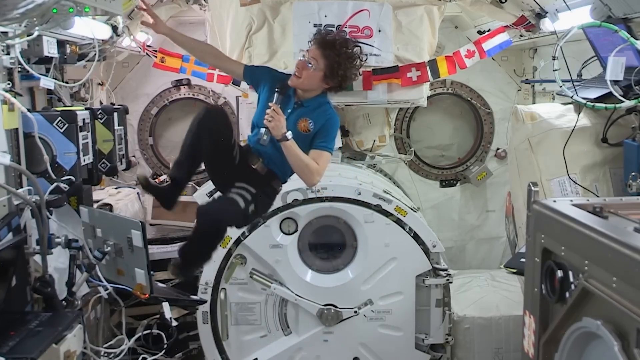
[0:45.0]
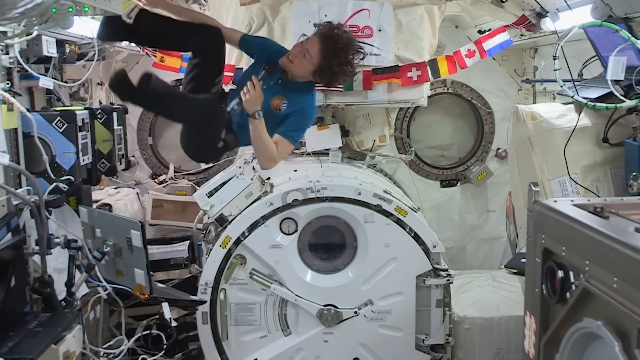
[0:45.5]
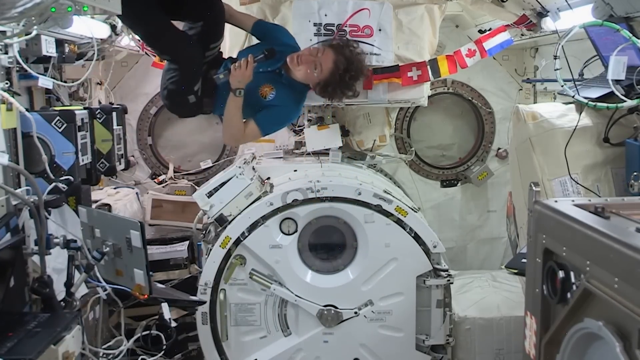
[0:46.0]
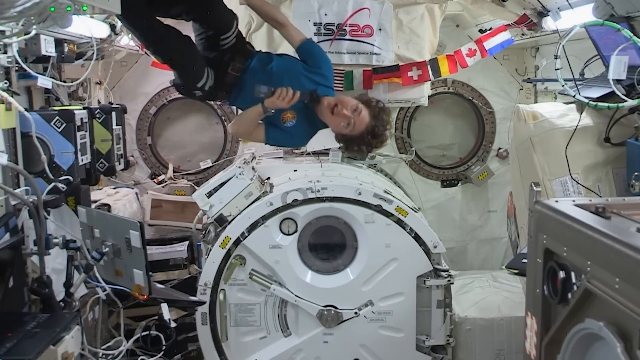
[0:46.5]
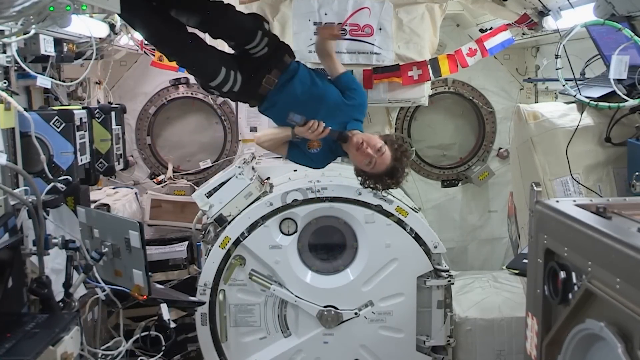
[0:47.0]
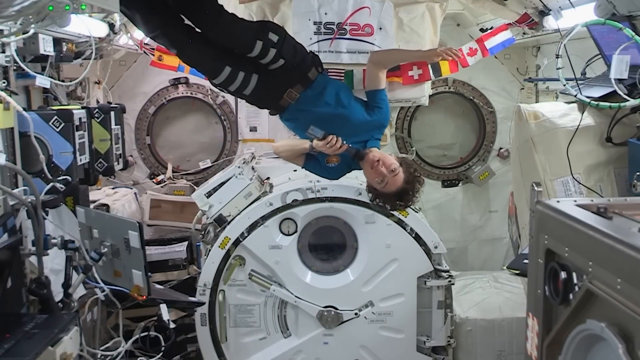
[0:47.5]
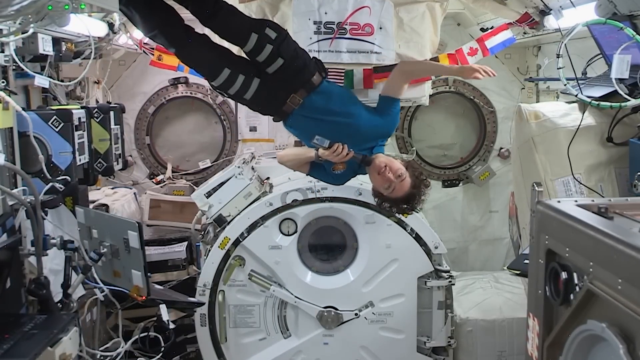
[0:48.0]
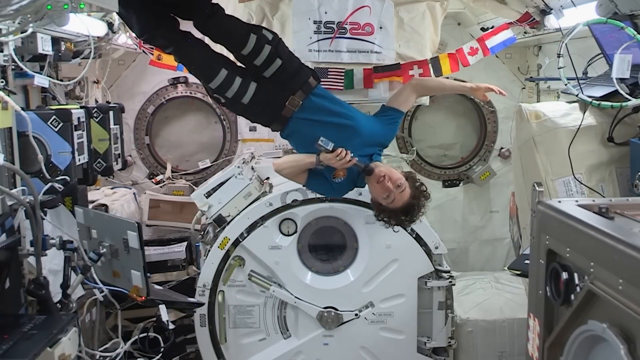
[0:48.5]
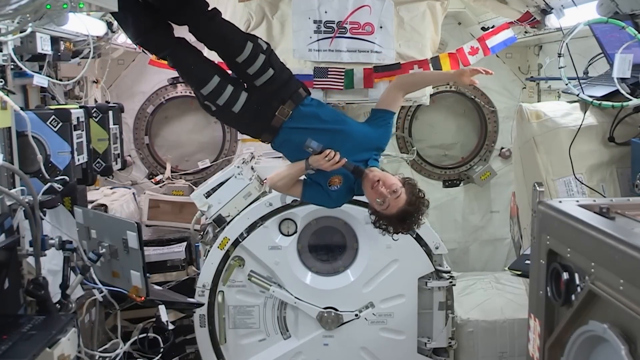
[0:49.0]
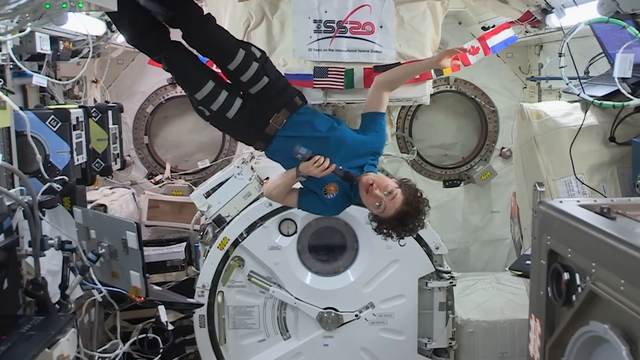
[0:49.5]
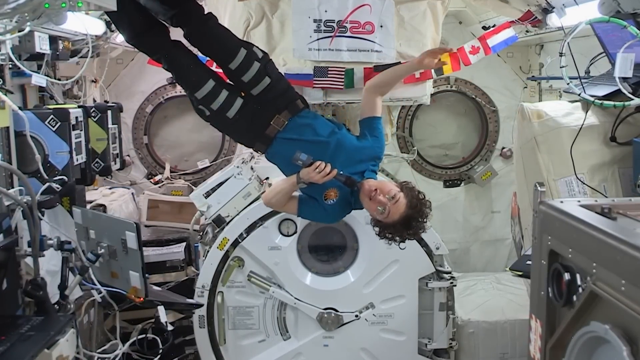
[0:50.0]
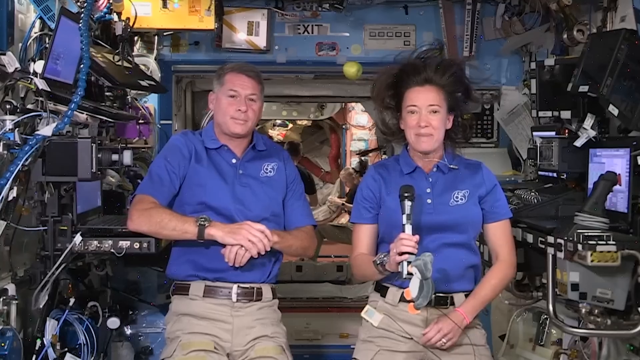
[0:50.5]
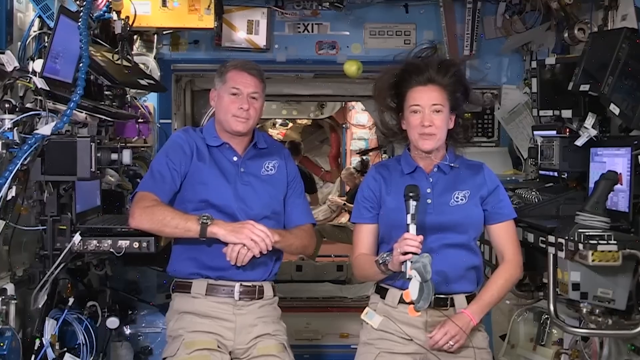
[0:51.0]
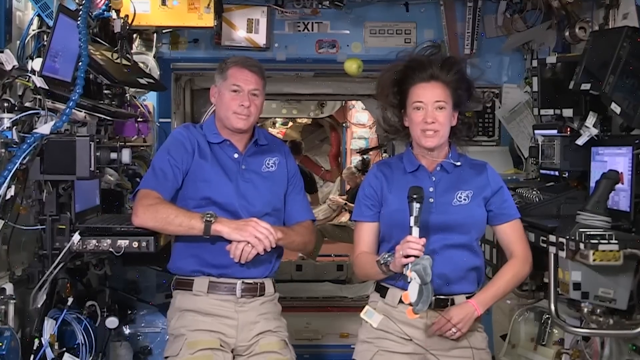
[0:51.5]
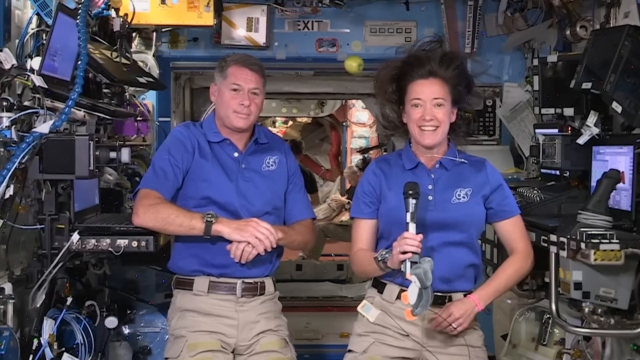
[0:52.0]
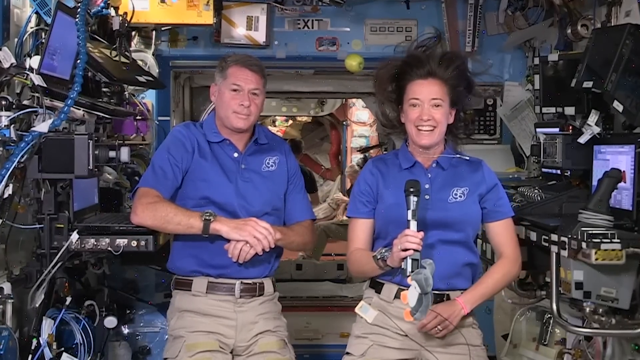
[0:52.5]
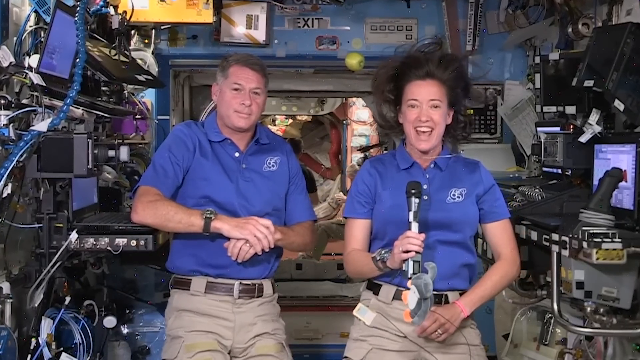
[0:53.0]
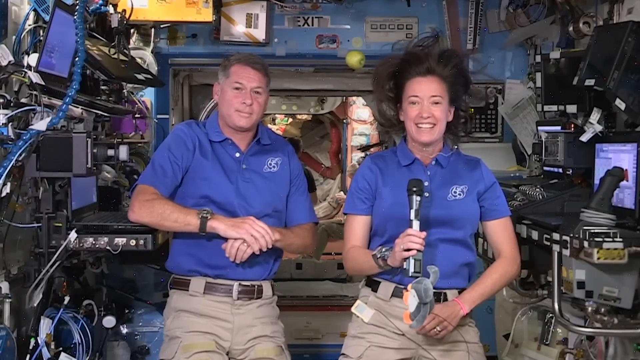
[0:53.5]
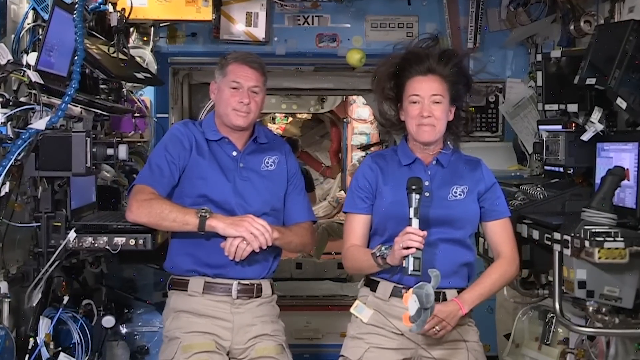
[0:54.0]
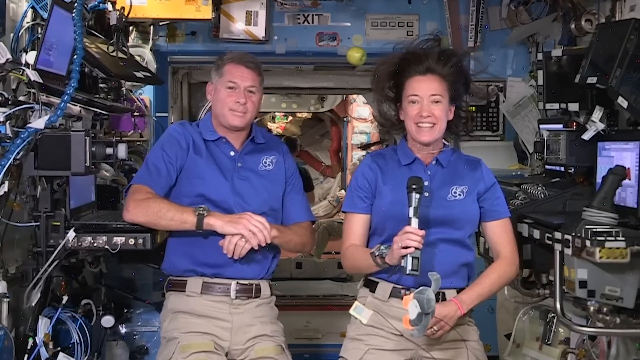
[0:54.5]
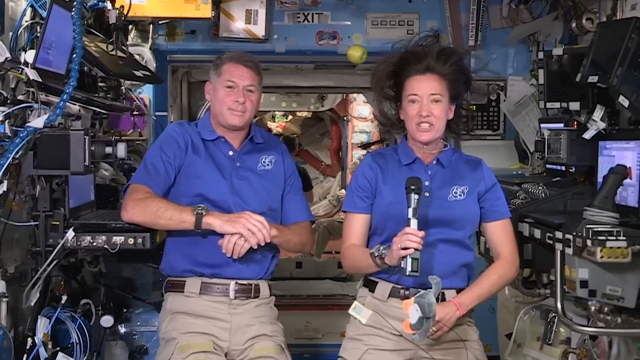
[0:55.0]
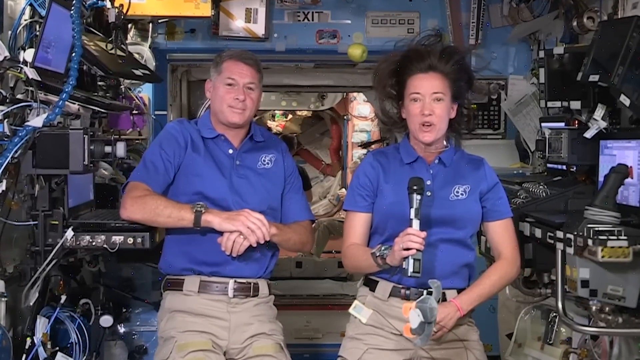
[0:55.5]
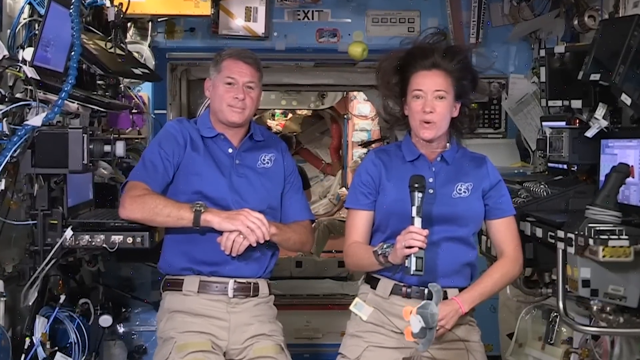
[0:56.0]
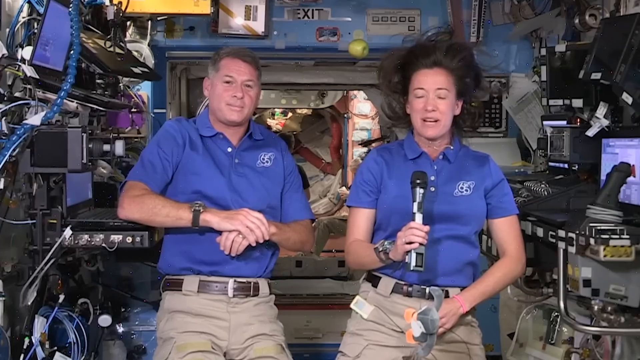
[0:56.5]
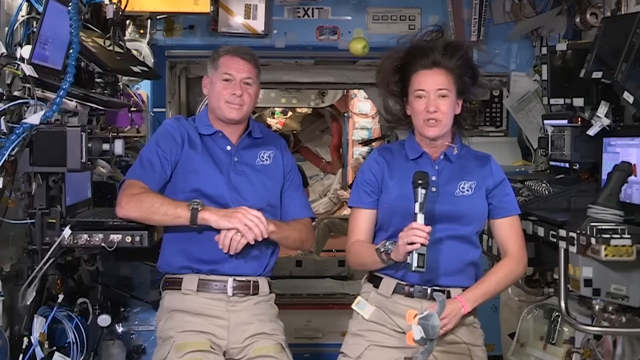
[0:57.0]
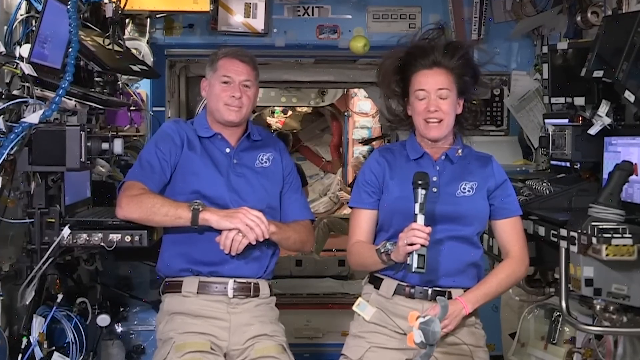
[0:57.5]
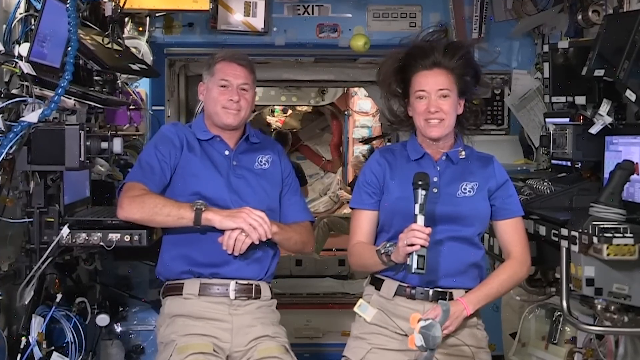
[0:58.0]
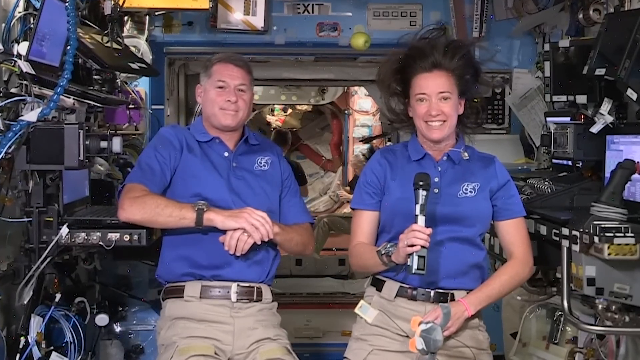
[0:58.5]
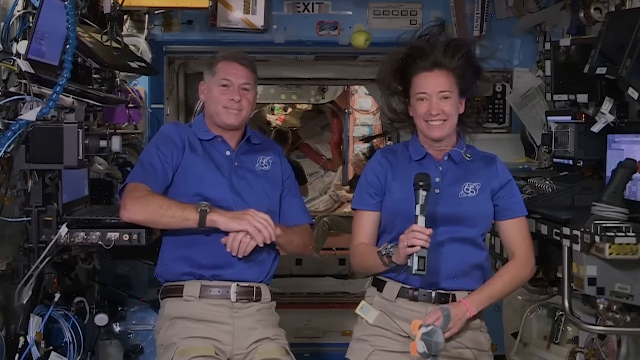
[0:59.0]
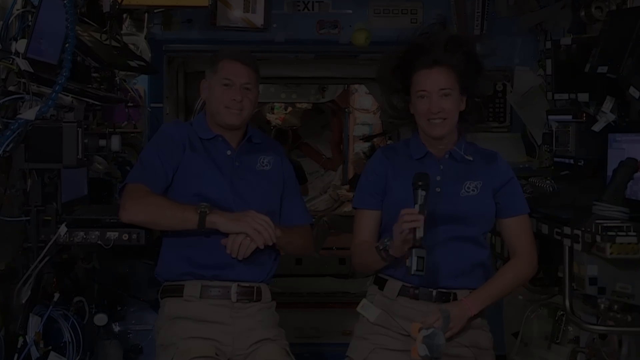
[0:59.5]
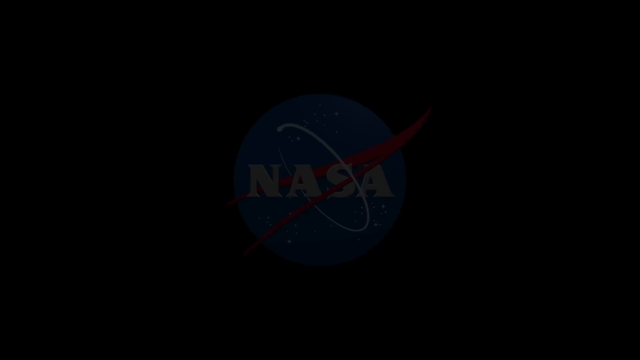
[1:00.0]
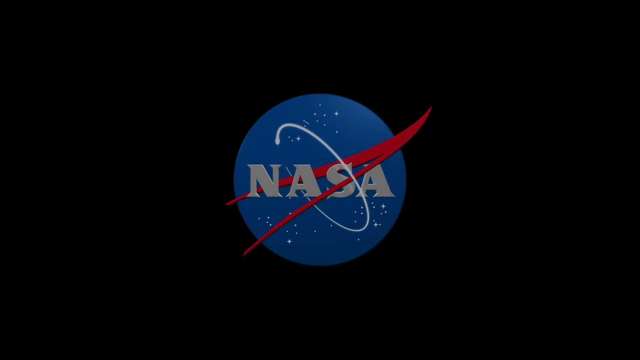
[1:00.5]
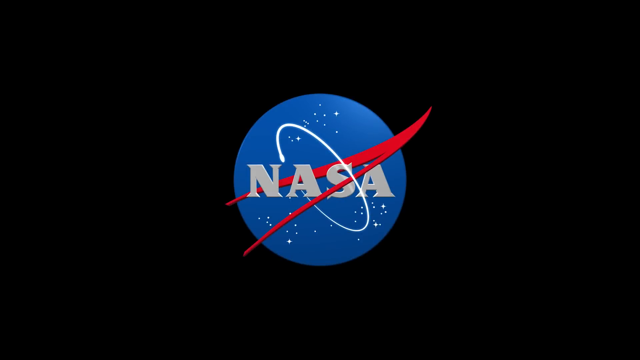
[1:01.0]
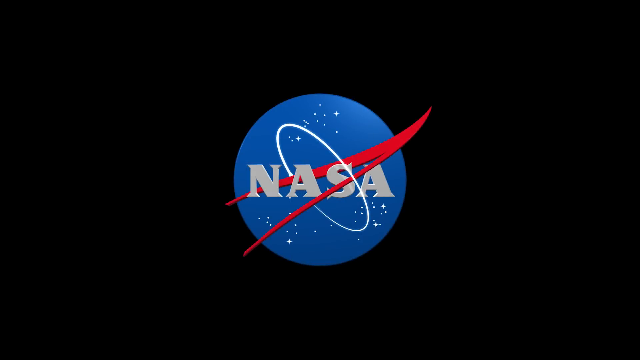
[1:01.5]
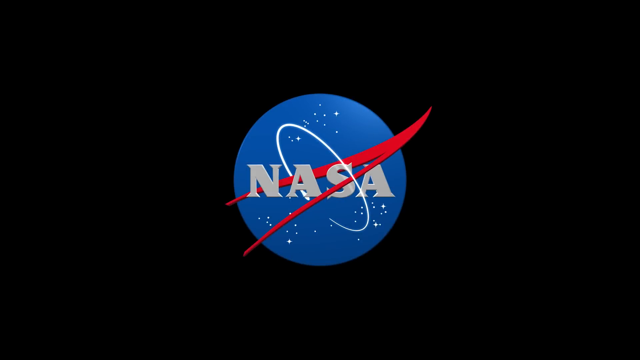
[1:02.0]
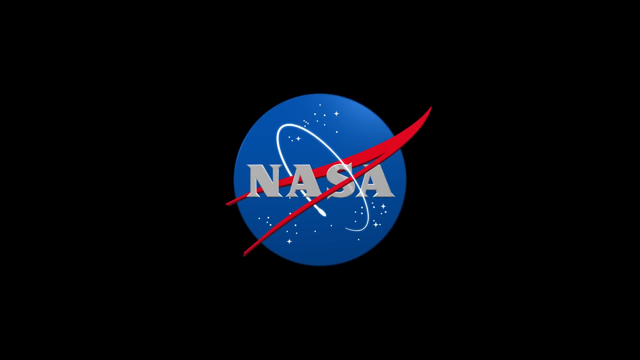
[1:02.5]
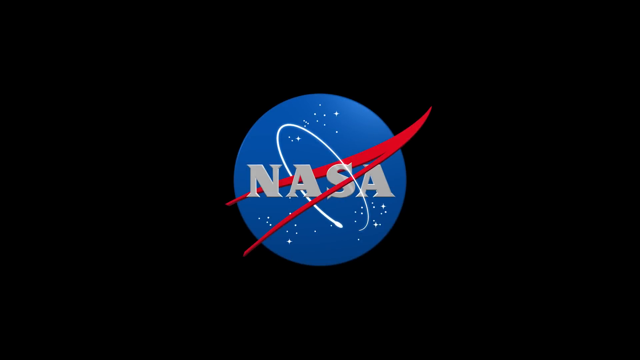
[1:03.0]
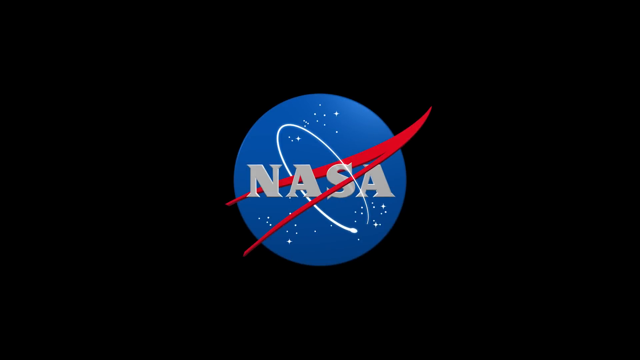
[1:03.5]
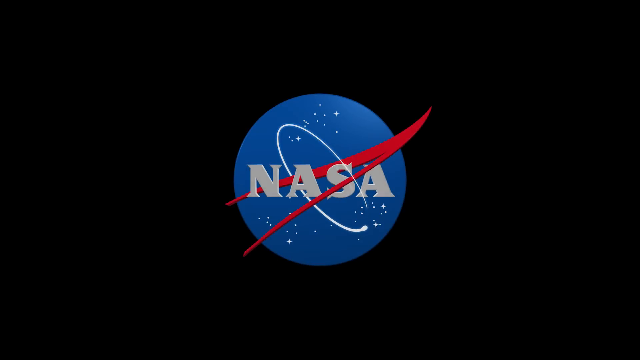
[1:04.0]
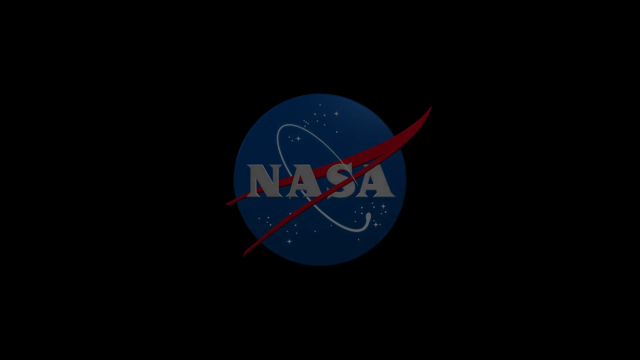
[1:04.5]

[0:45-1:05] A person whose gender is hard to tell floats around, as if standing on the ceiling and looking down, holding a microphone. They have a goofy, light-hearted attitude and seem to be having a good time. They wear a blue shirt and black pants and possibly glasses. Lots of technical machinery is behind them in this room, along with the ISS logo and the flags of different countries. The video then cuts back to the original two astronauts in their place, seemingly continuing to talk into their microphones, apparently giving more of the interview or asking the other astronauts questions. It then cuts to a big NASA logo.